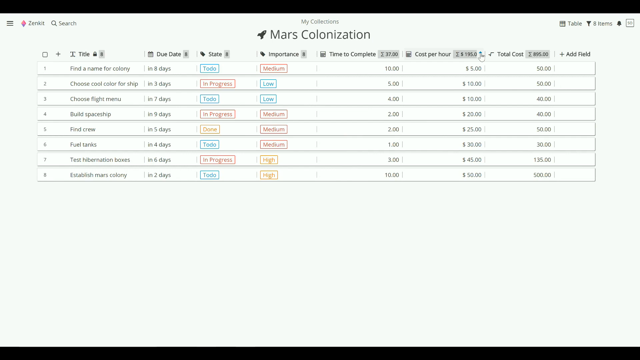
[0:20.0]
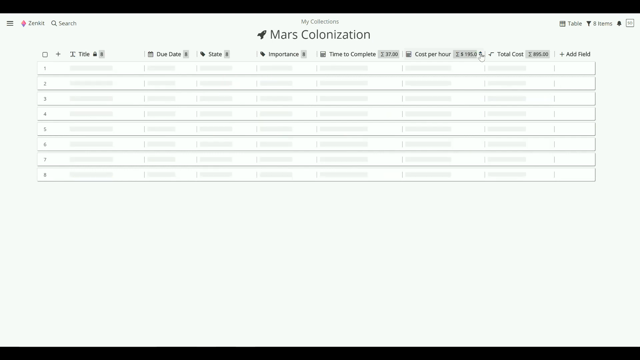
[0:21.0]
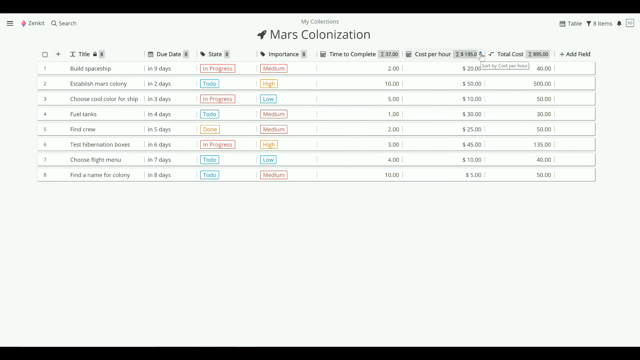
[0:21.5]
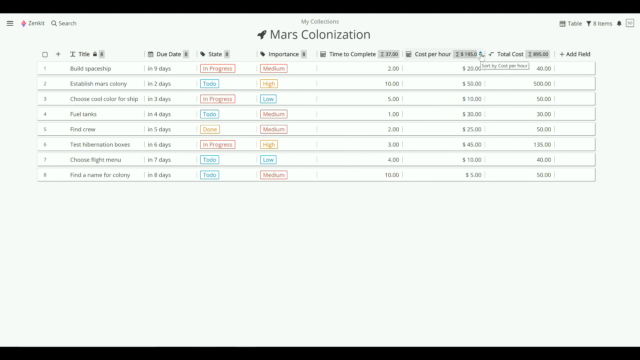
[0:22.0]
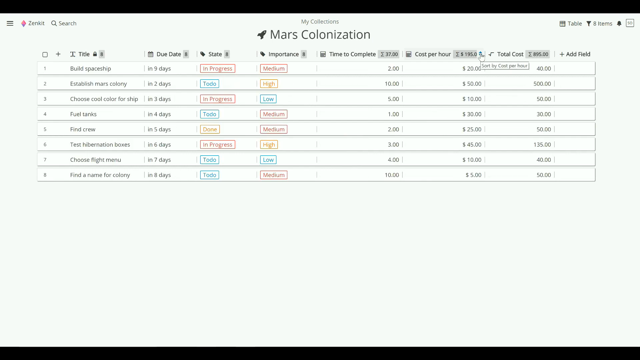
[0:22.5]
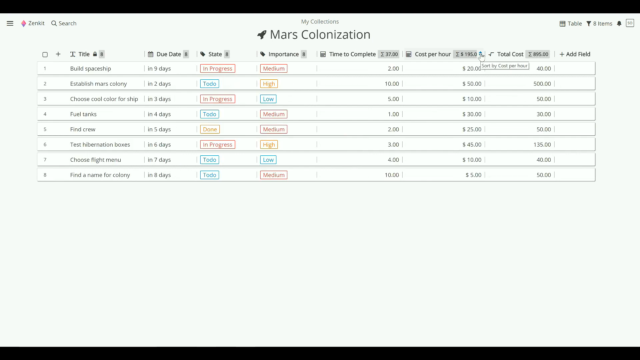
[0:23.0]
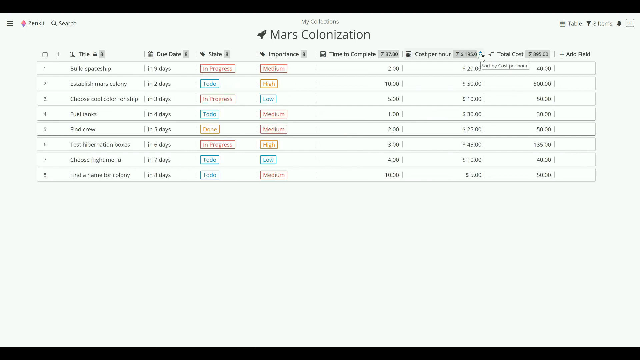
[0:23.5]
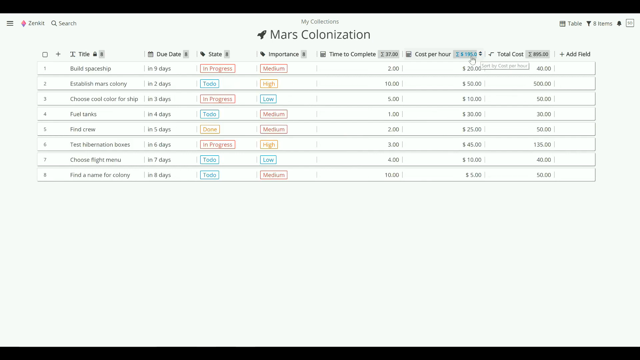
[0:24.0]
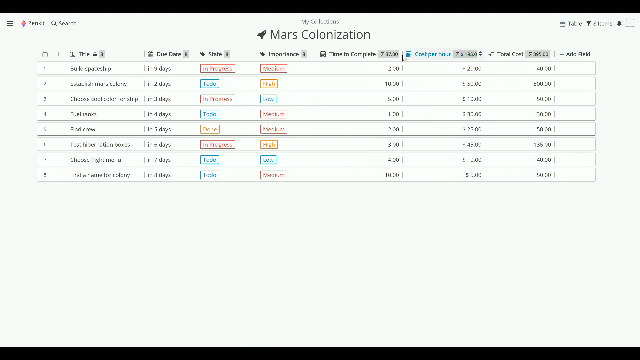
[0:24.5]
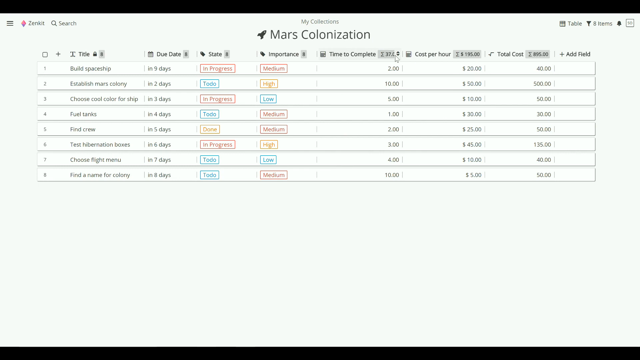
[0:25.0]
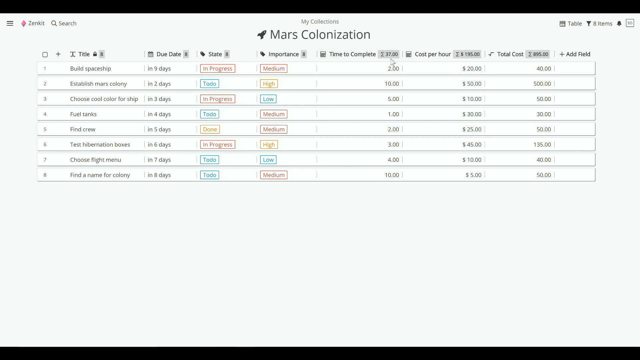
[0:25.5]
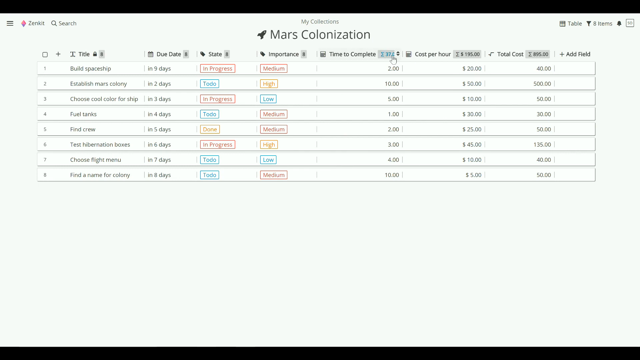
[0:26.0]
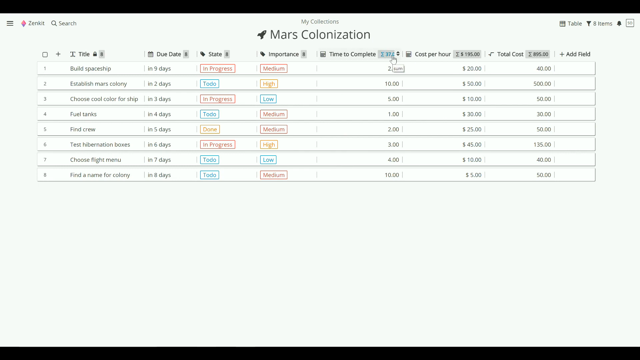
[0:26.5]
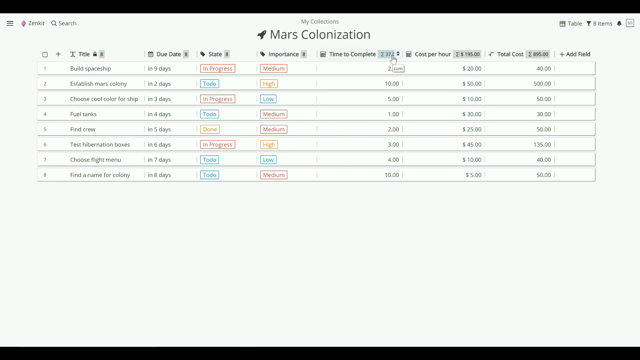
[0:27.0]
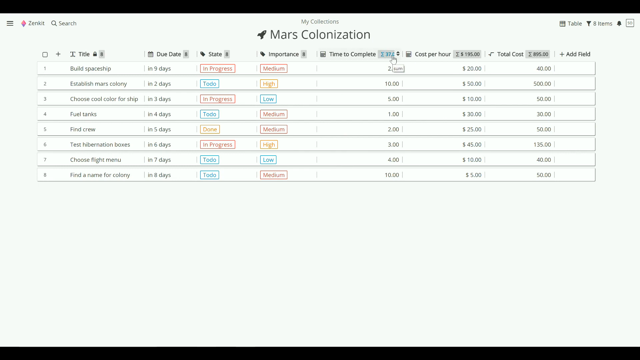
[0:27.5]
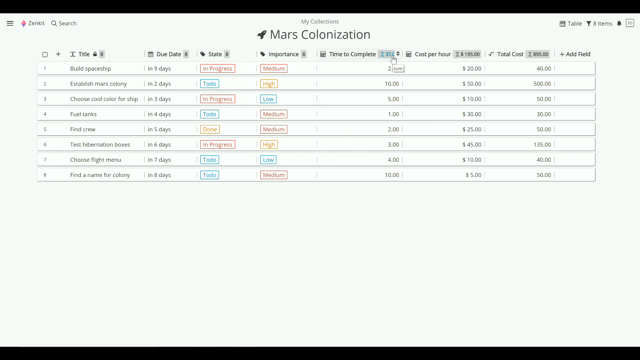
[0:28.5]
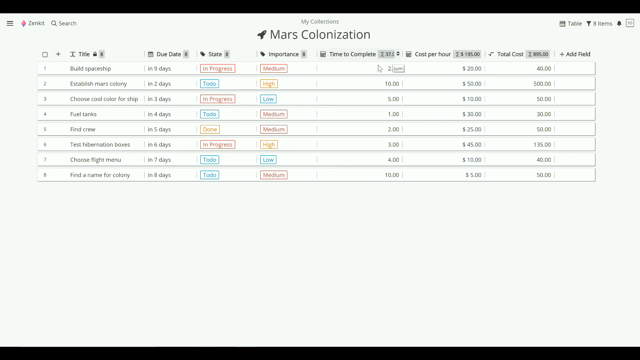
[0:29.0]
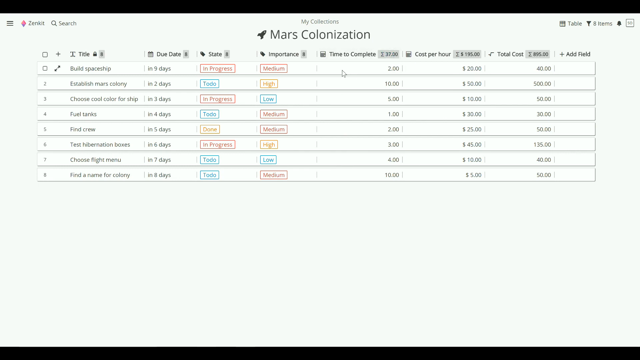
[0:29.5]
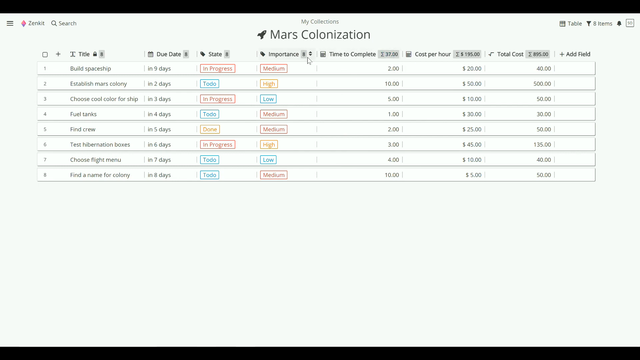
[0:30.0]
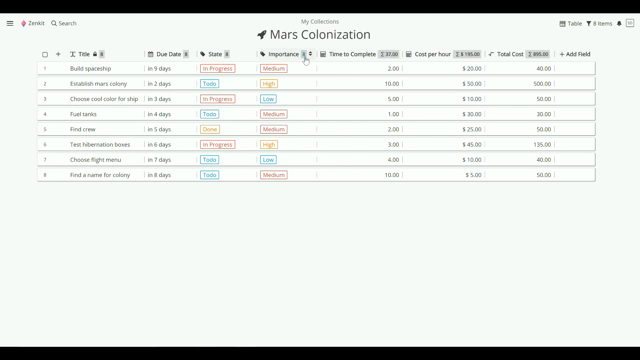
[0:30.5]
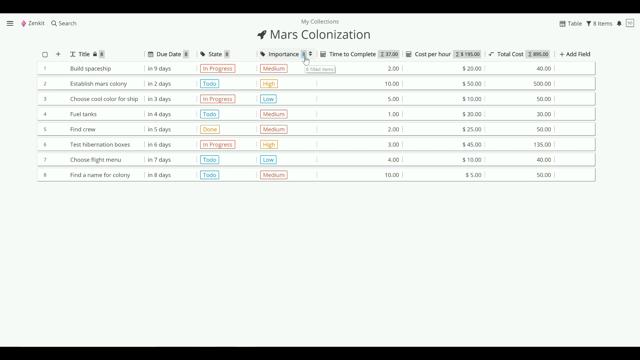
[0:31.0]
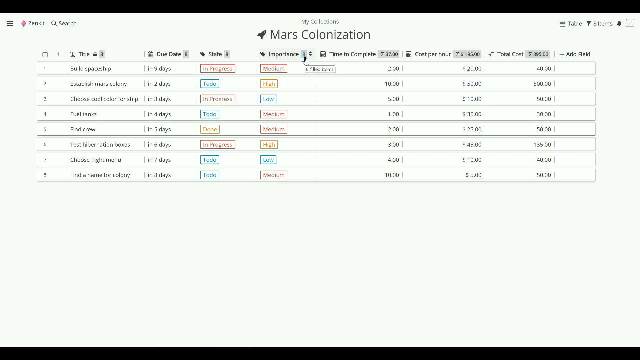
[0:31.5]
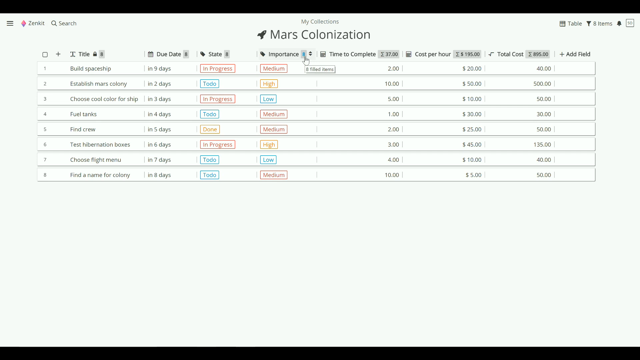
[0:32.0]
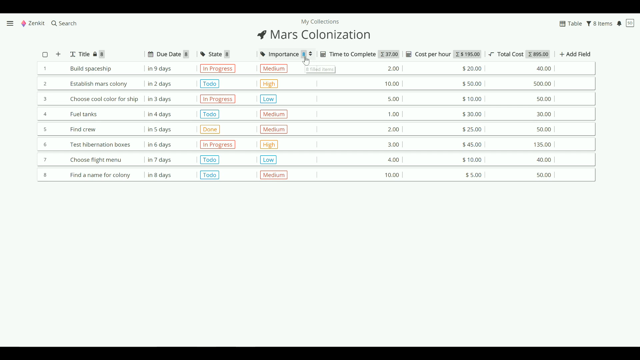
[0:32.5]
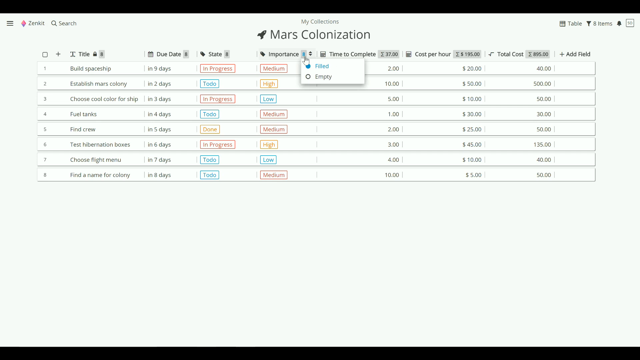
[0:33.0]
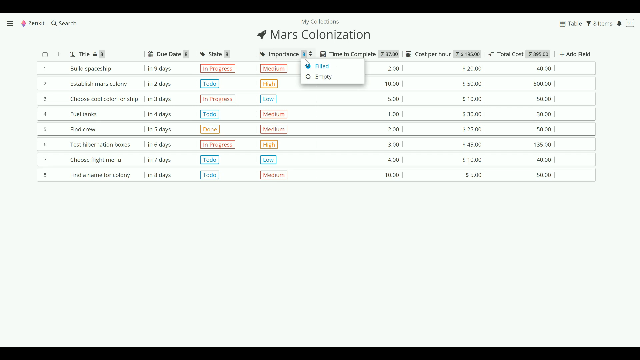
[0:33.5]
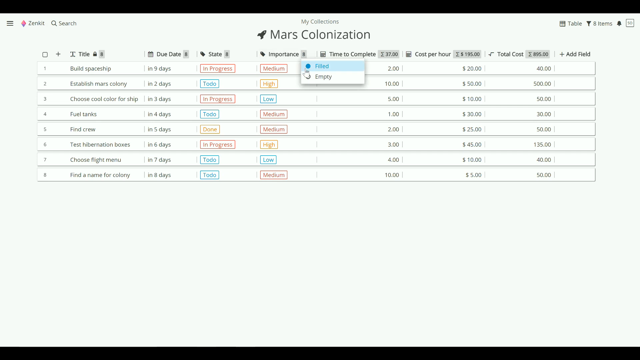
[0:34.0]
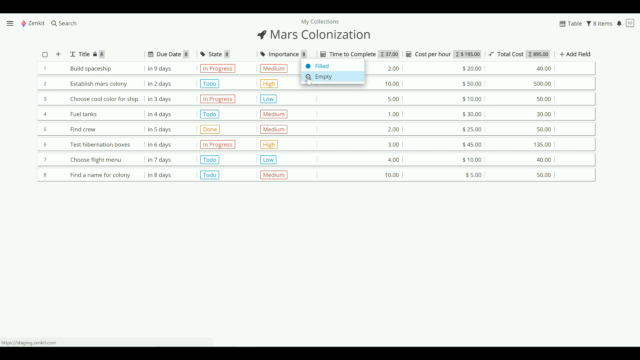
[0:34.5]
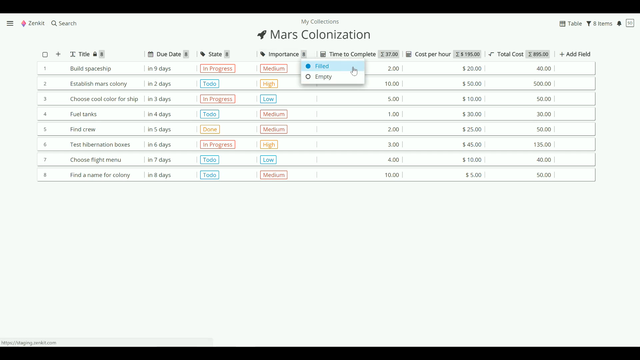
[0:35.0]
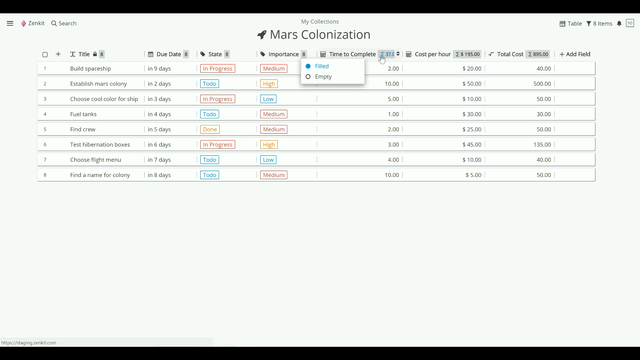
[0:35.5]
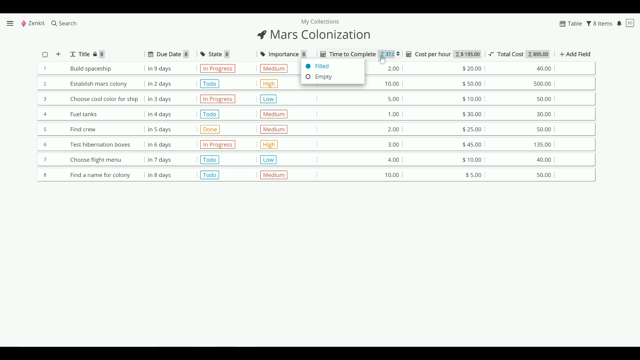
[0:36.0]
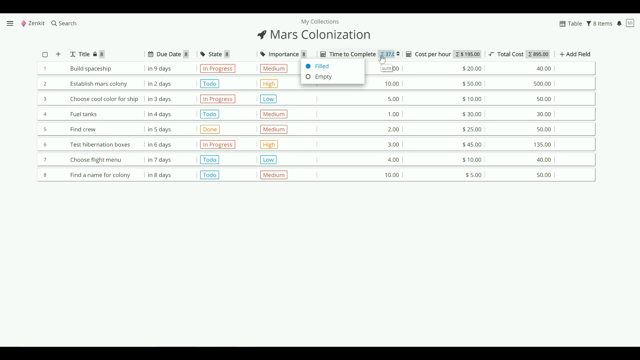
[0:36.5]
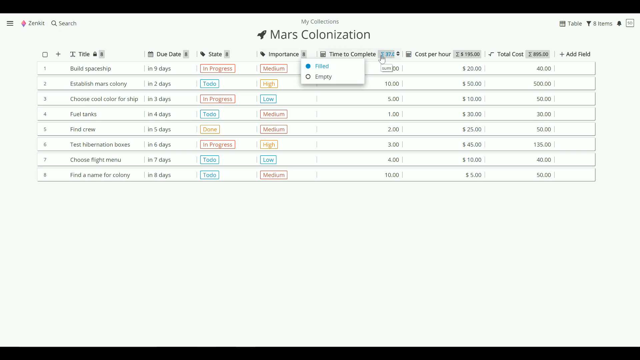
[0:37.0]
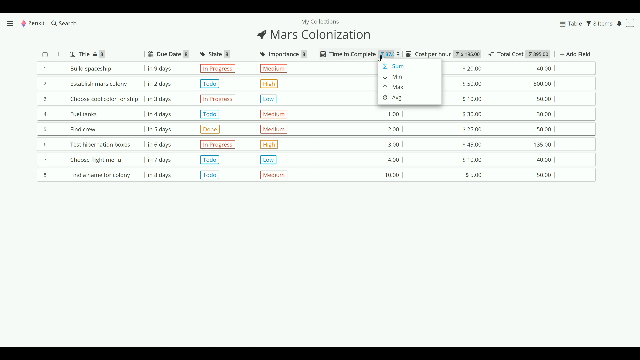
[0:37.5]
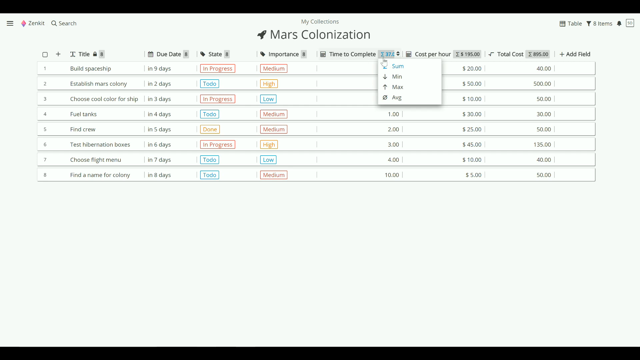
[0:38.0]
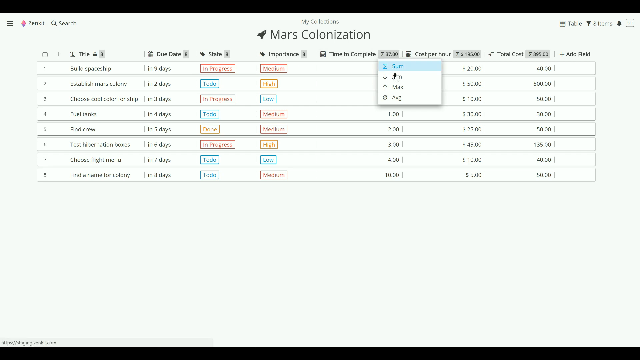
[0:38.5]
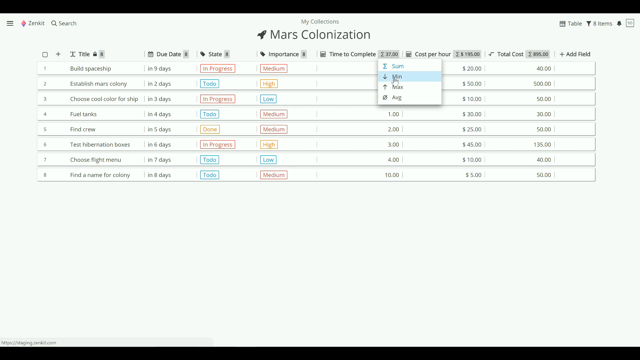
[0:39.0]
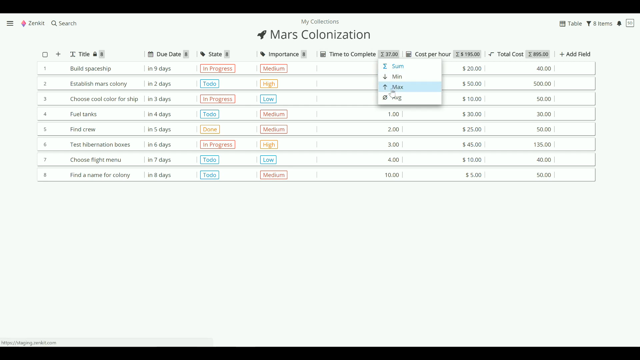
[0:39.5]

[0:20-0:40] The table apparently lists a fictitious series of steps for colonizing Mars, with items such as "build spaceship", "establish Mars colony", "fuel tanks", "choose cool color for ship", "find crew", "test hibernation boxes" and "choose flight menu". Each item has a due date column and labels for status, importance, time to complete, cost per hour and total cost. At the far right is an empty column with "add field" above it, apparently for adding a column of the user's choice. In the far left column each row is numbered, with a checkbox at the top. Next to each column heading there appear to be sorting and filtering options.